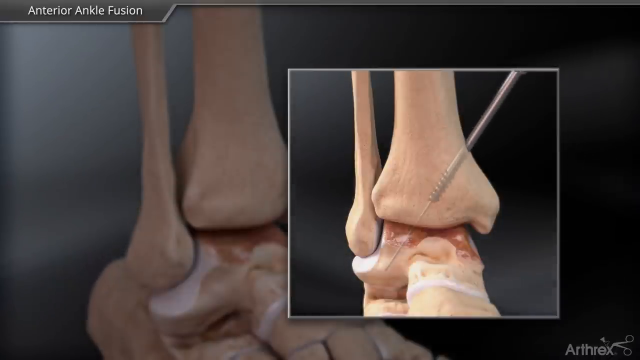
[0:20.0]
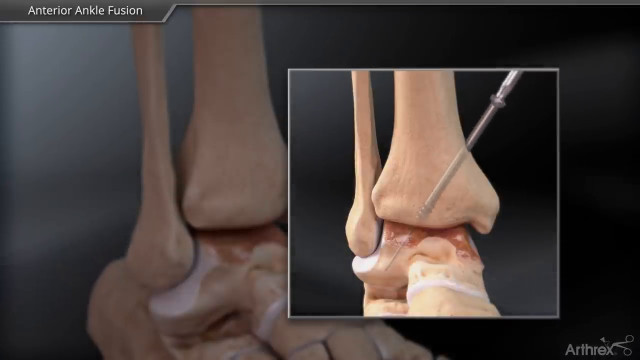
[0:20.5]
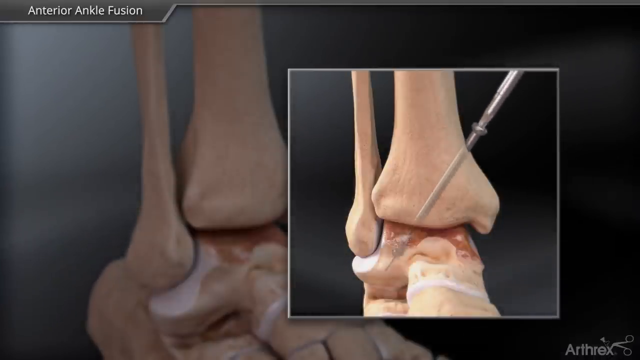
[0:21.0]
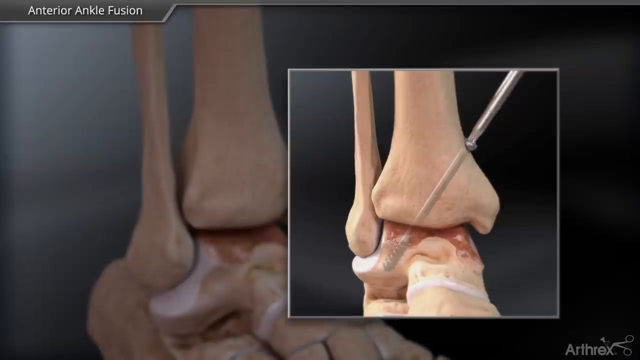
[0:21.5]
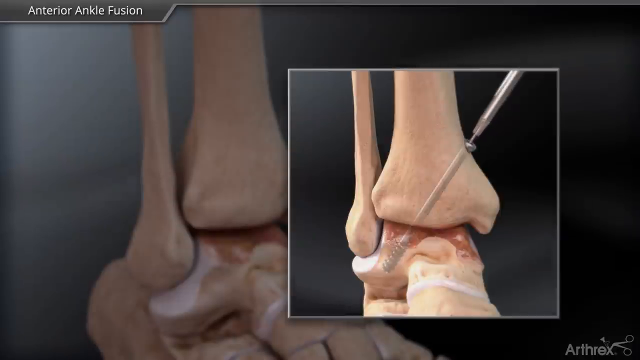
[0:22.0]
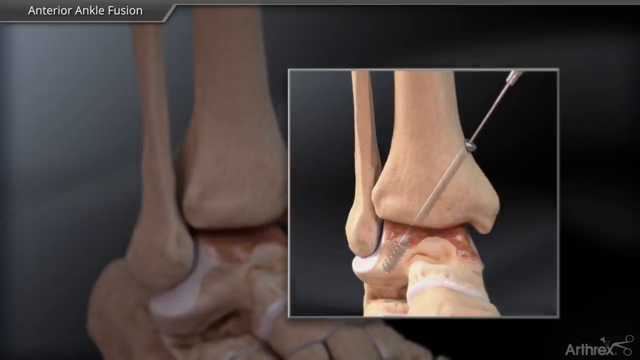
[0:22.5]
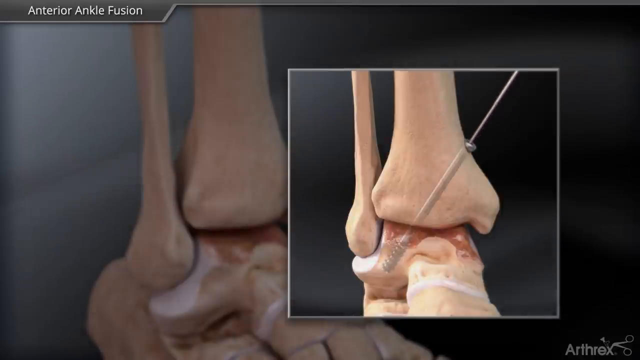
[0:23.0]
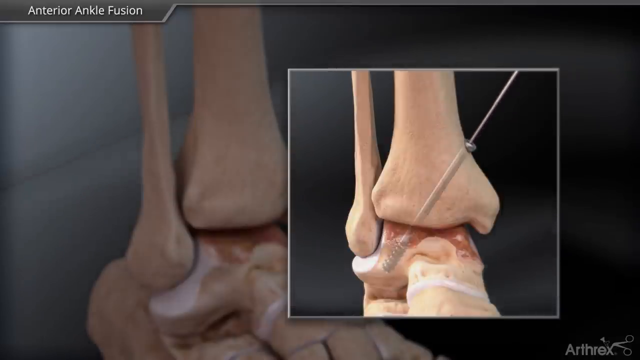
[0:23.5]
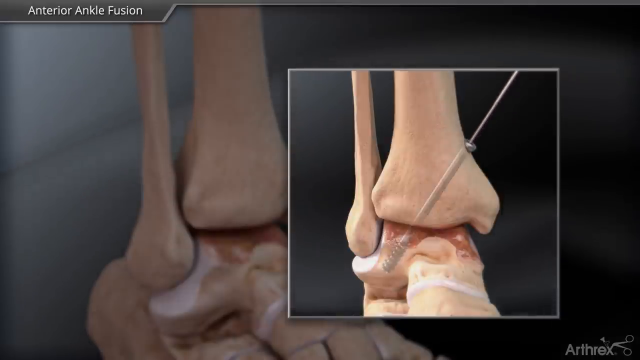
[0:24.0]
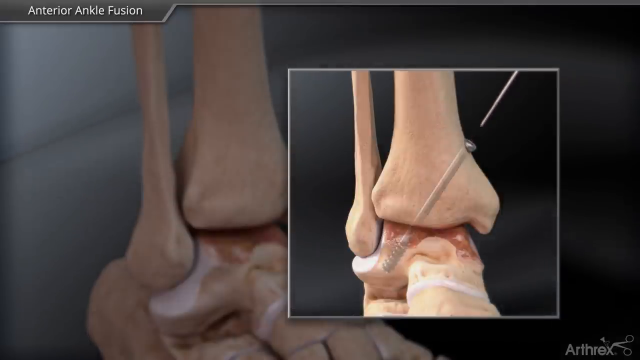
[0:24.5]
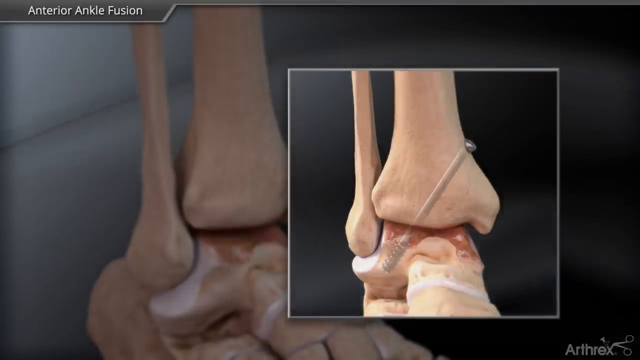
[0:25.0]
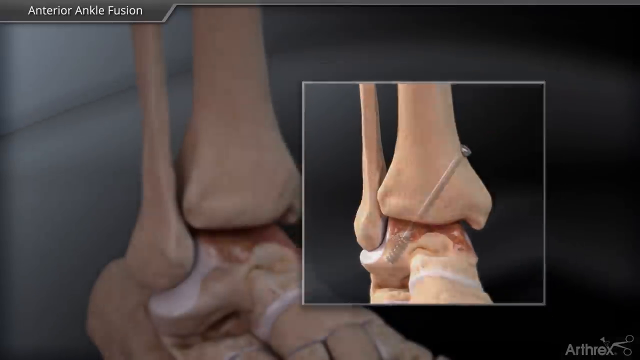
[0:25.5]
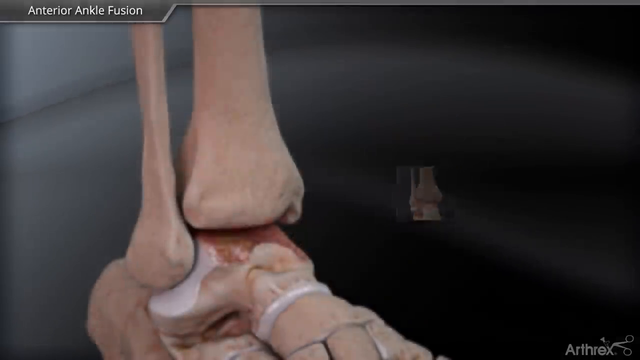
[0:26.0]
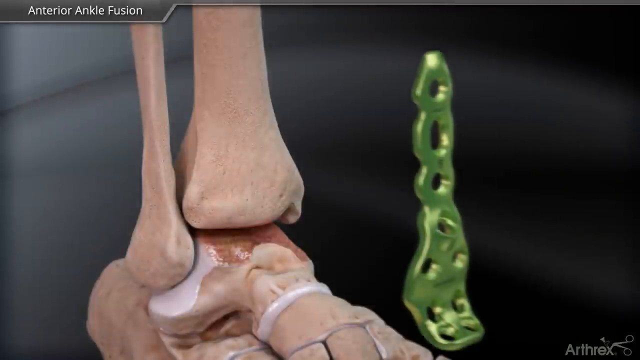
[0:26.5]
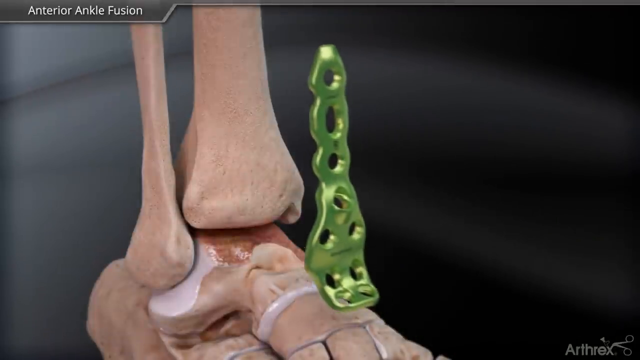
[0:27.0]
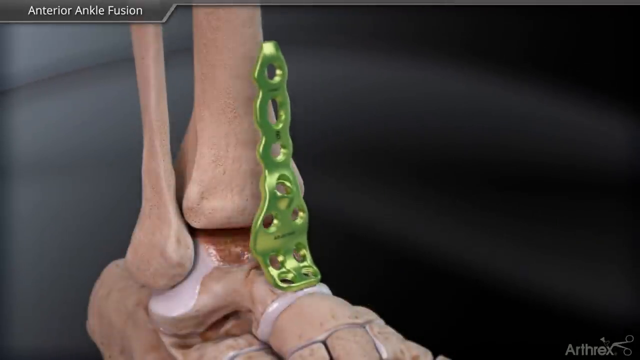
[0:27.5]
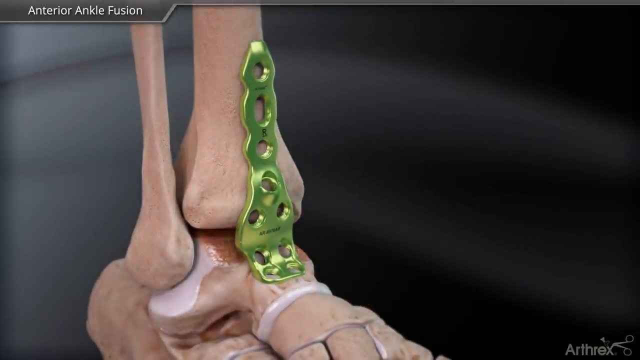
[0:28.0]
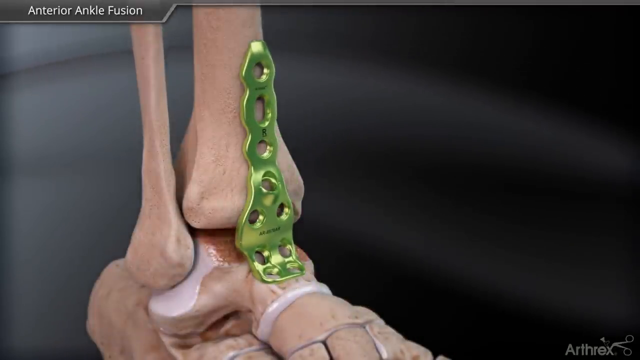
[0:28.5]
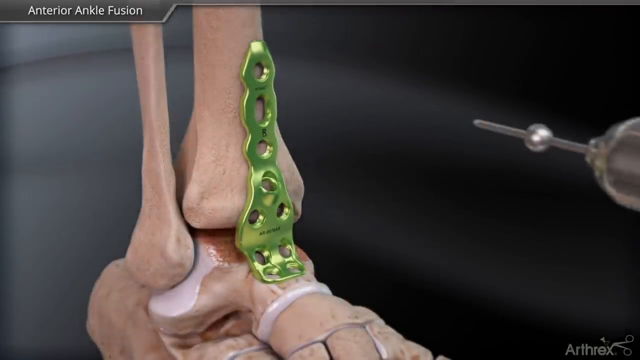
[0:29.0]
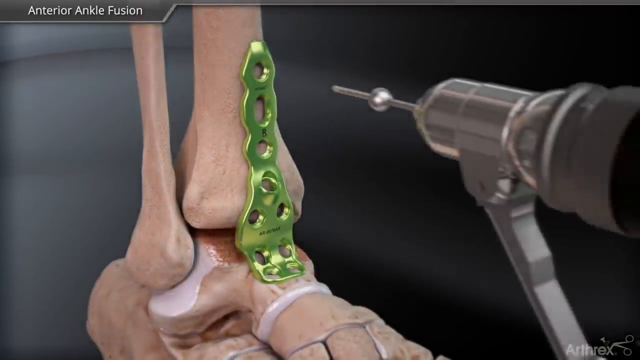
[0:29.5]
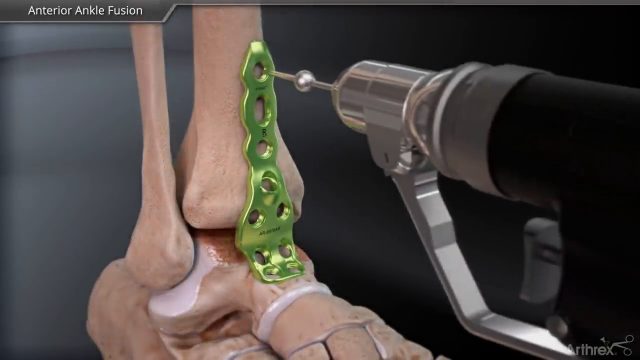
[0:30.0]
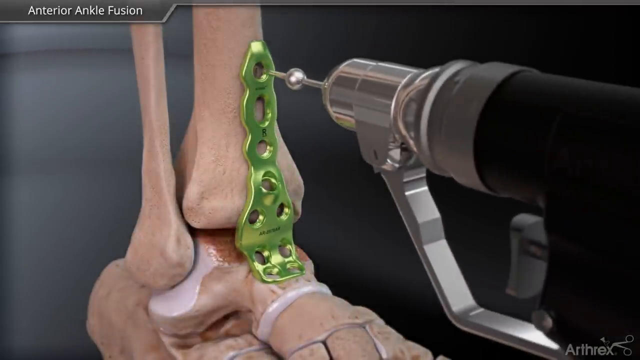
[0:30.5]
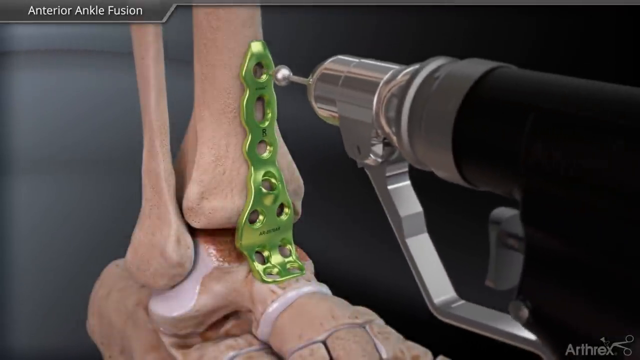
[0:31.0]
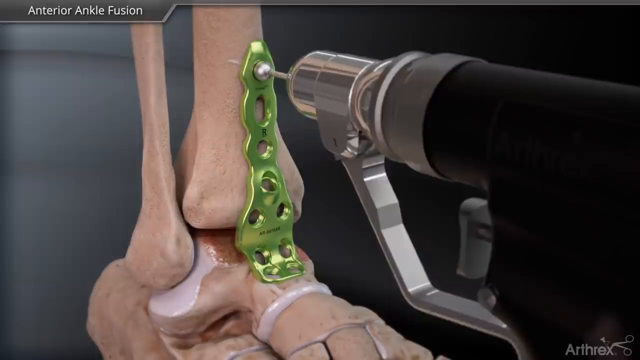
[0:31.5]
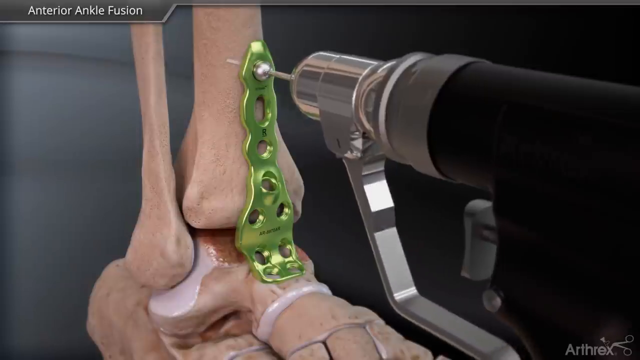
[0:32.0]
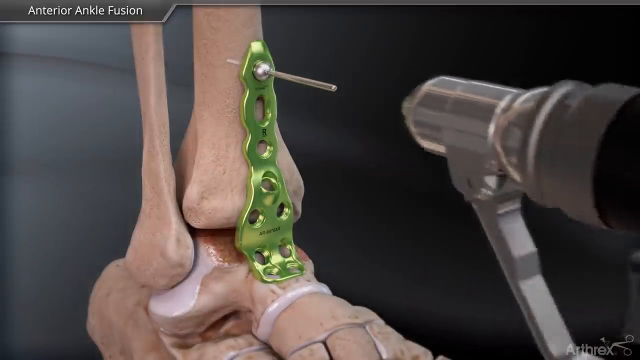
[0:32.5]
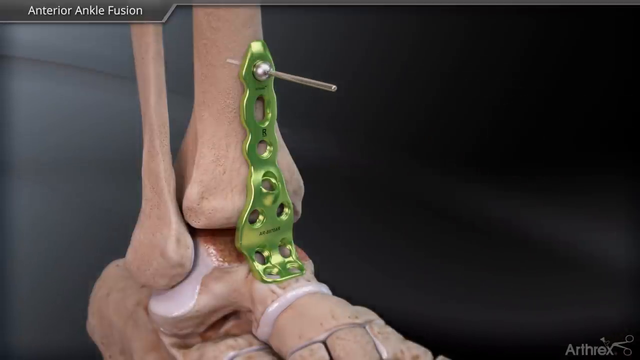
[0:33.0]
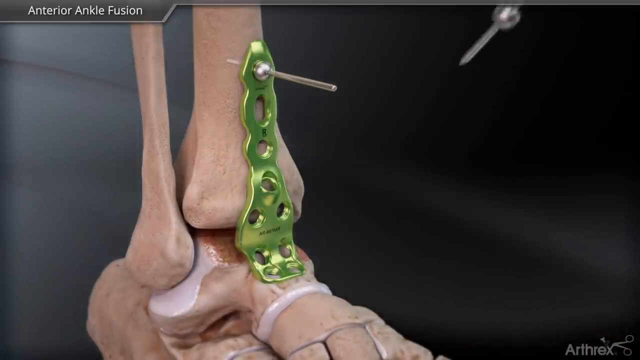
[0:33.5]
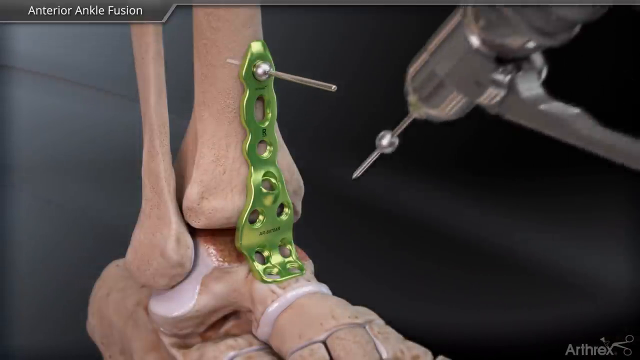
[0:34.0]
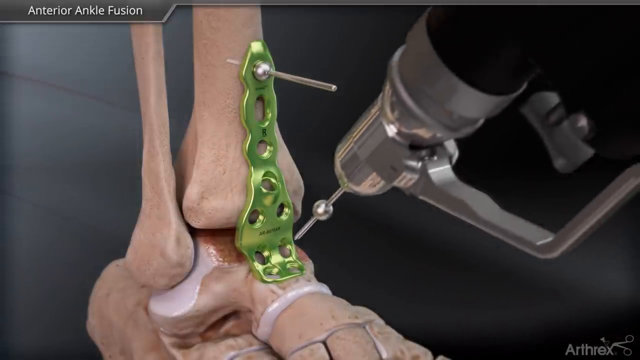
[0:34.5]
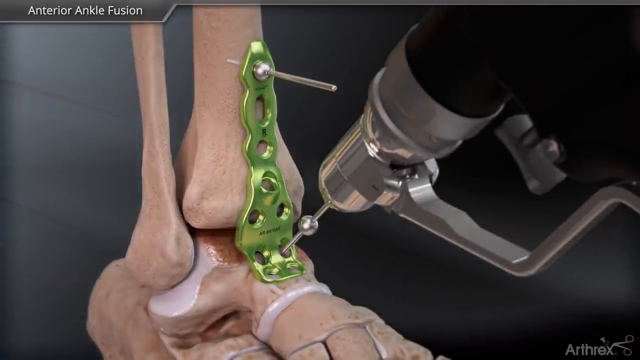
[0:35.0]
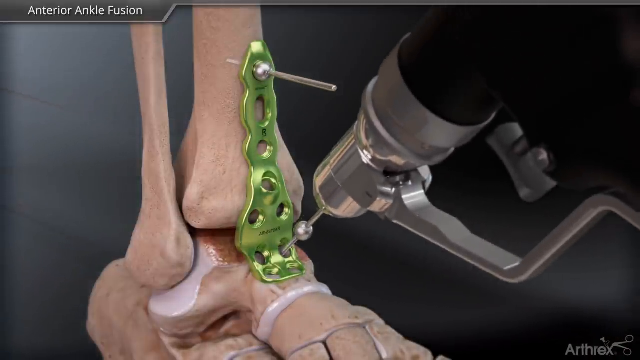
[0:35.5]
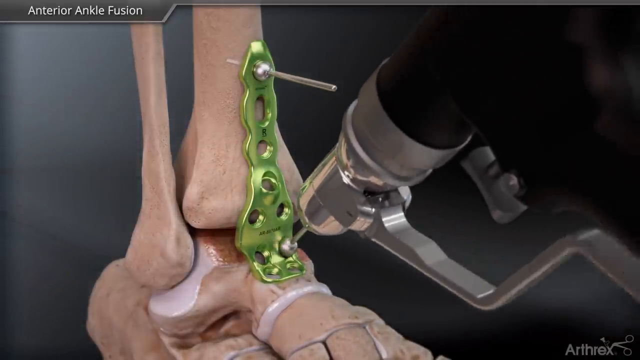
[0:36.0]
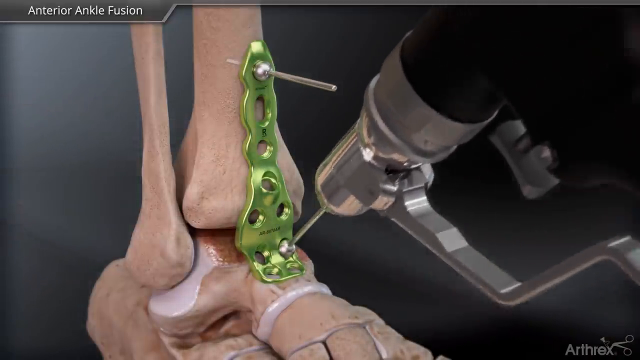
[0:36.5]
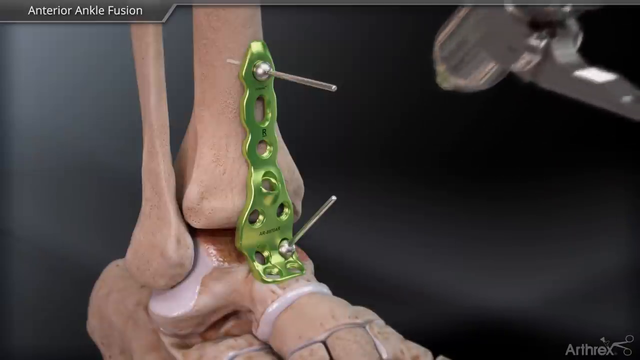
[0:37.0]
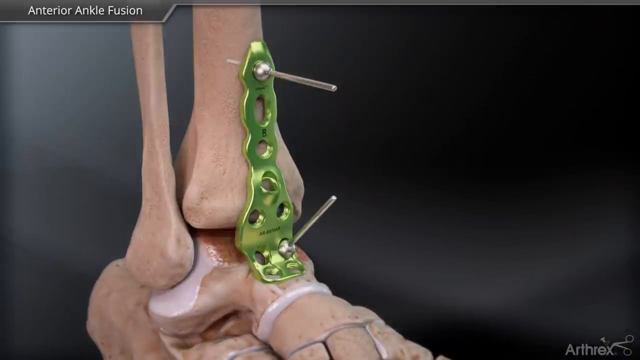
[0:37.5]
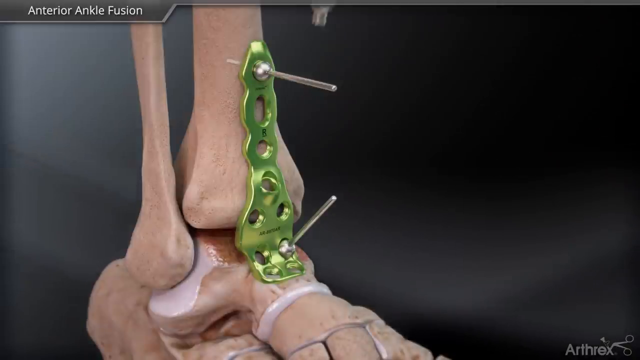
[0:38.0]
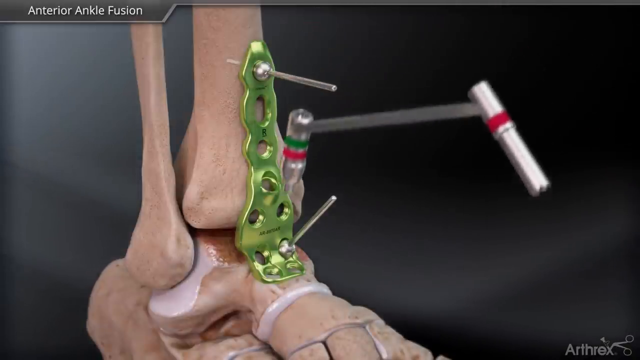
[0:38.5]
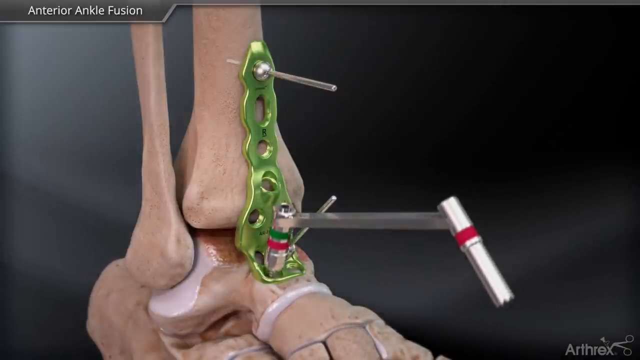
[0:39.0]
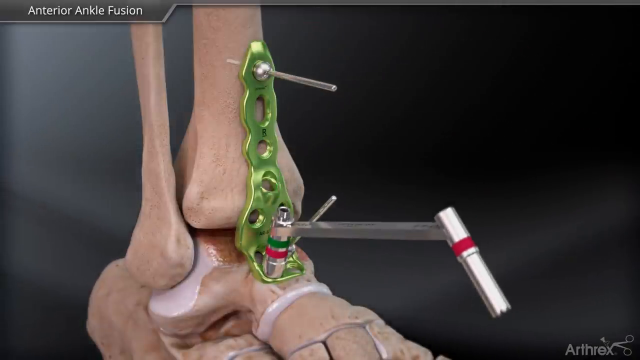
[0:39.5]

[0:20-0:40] The needle is placed deeper and deeper into the bottom of the foot. There seems to be a screw at the end of the needle that is also being inserted; the screw has a wound-up end and a regular screw-shaped top. The top of the screw meets the top of the ankle bones, and the middle pin is removed from the center, leaving just a screw behind in the foot and ankle. The front animation disappears and a green bracket is placed on top of the original animation; it seems to have holes for other screws to be pinned into. A screwdriver device or drill puts short screws and pins into each to secure it, first one in the top, then the two bottom ones, before starting on the middle.